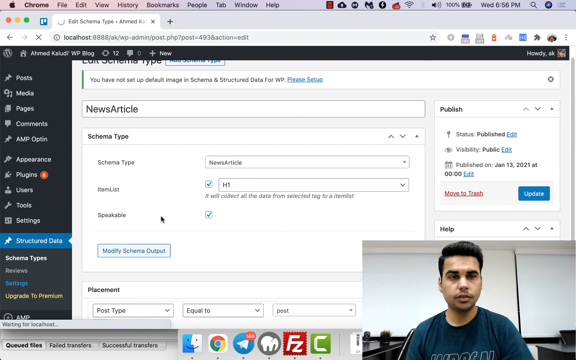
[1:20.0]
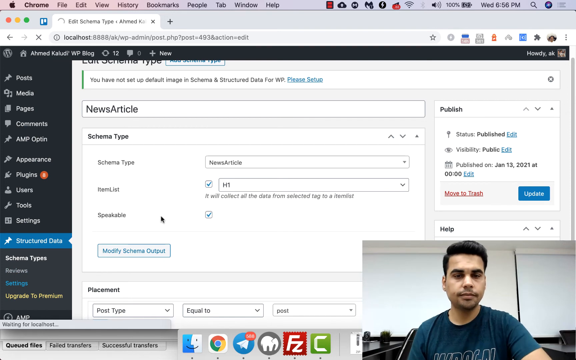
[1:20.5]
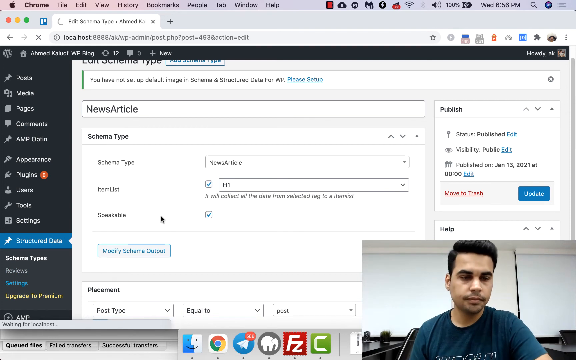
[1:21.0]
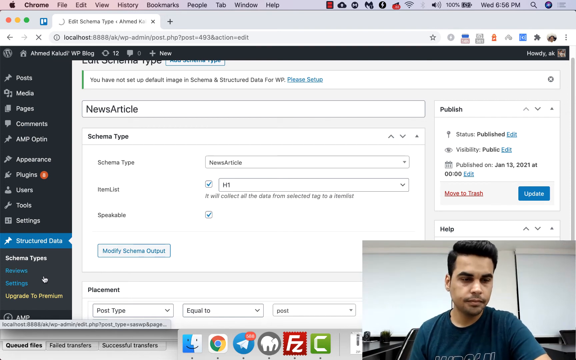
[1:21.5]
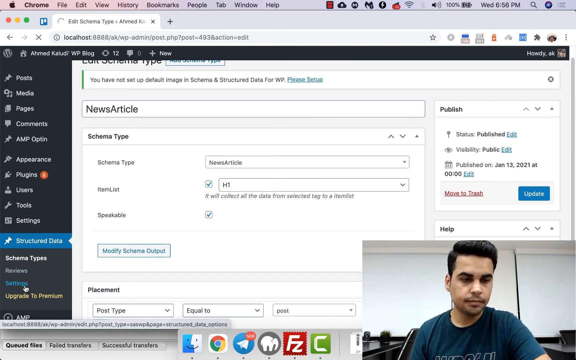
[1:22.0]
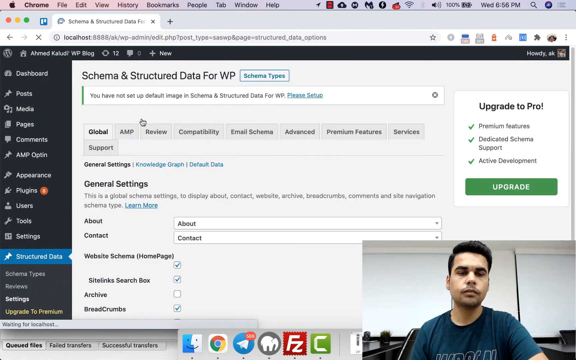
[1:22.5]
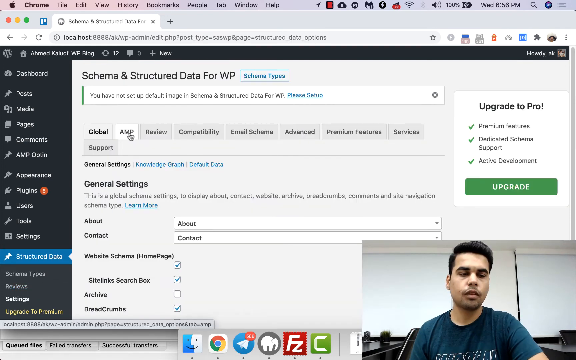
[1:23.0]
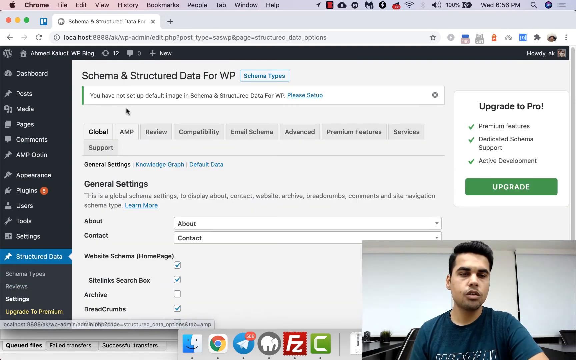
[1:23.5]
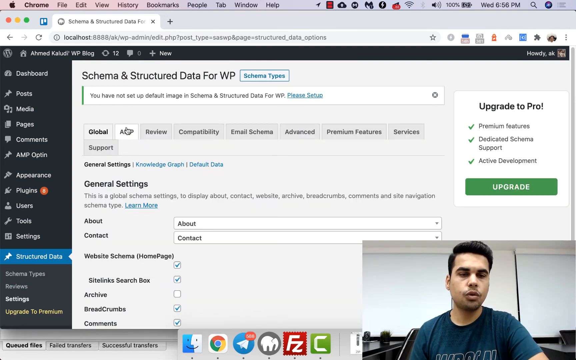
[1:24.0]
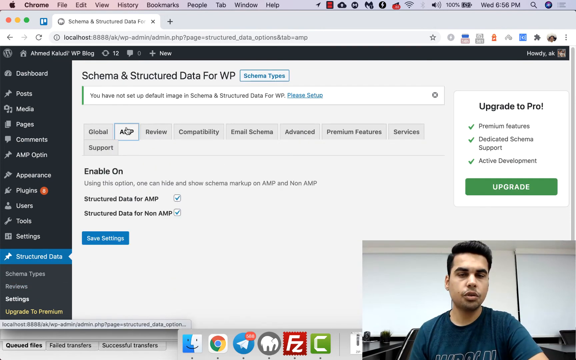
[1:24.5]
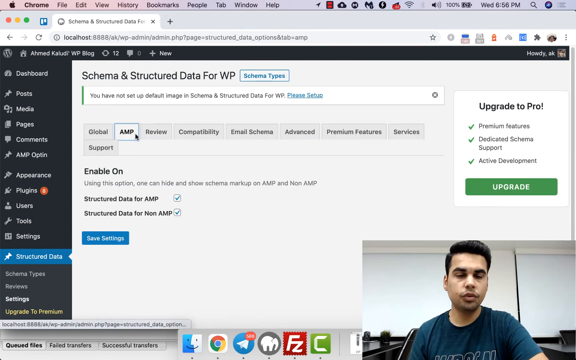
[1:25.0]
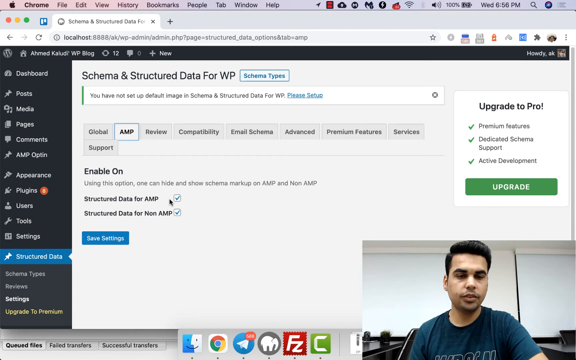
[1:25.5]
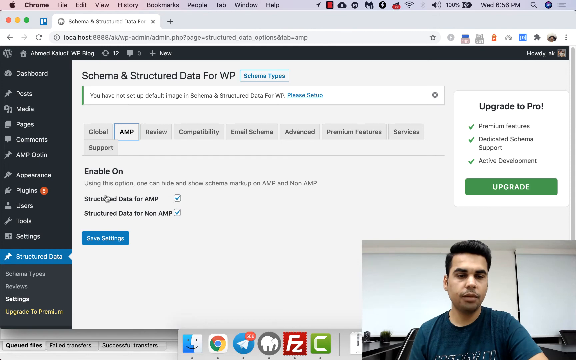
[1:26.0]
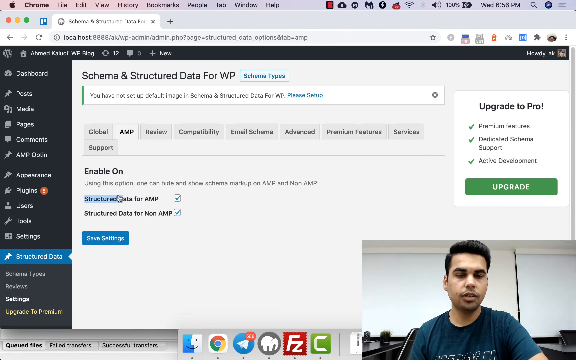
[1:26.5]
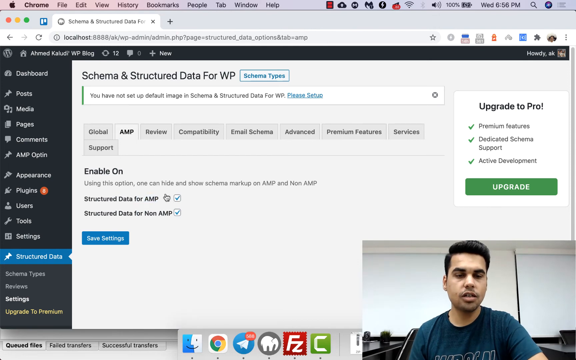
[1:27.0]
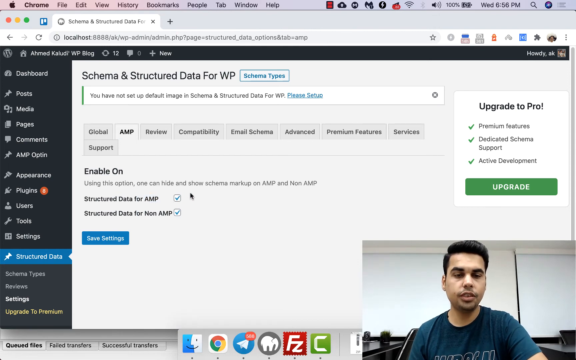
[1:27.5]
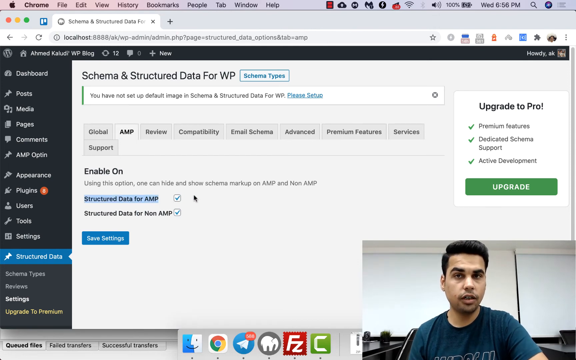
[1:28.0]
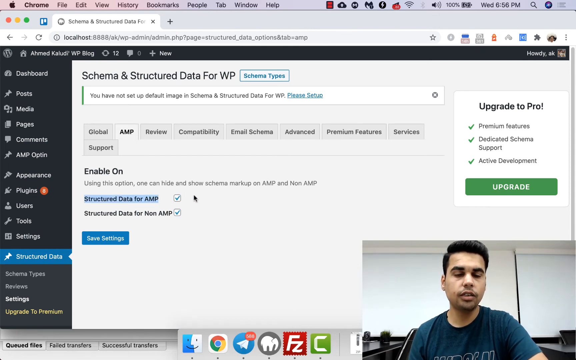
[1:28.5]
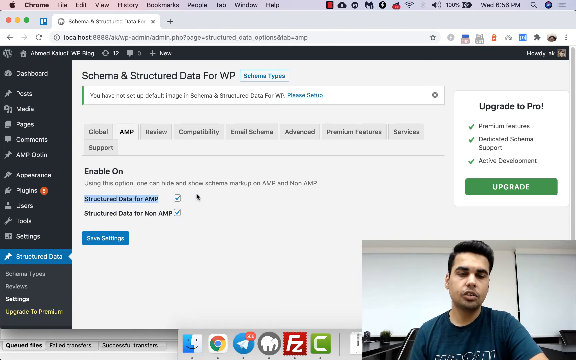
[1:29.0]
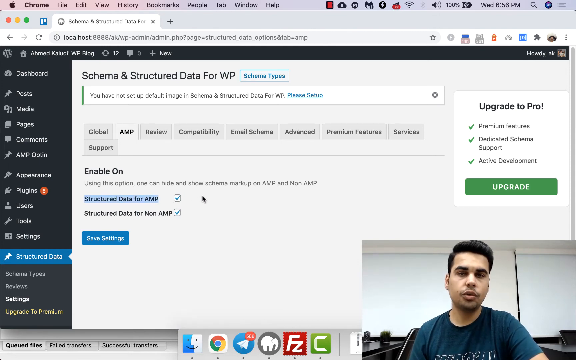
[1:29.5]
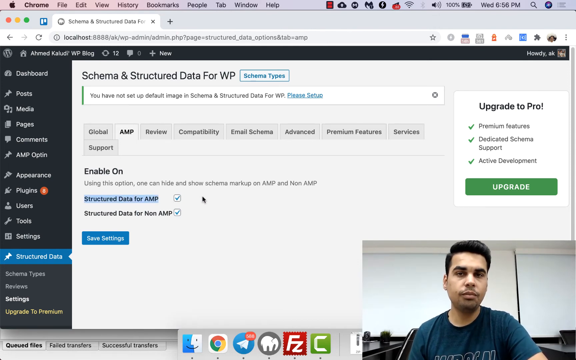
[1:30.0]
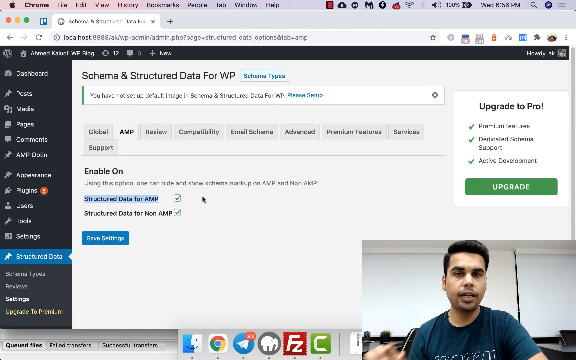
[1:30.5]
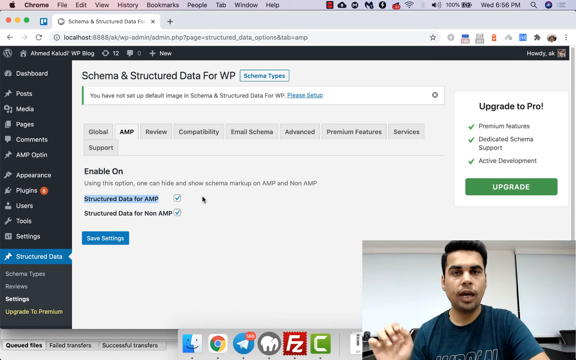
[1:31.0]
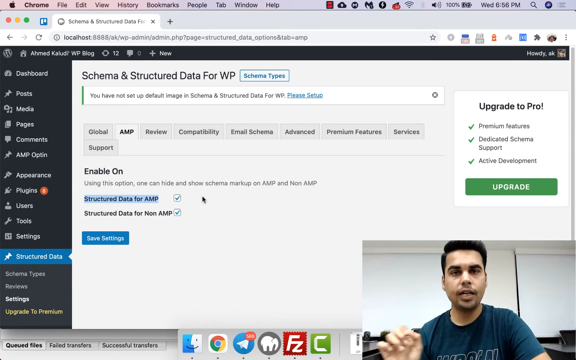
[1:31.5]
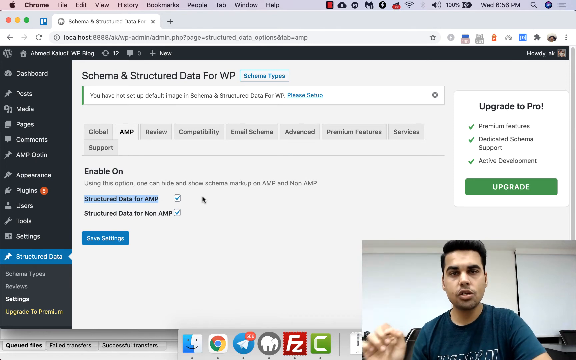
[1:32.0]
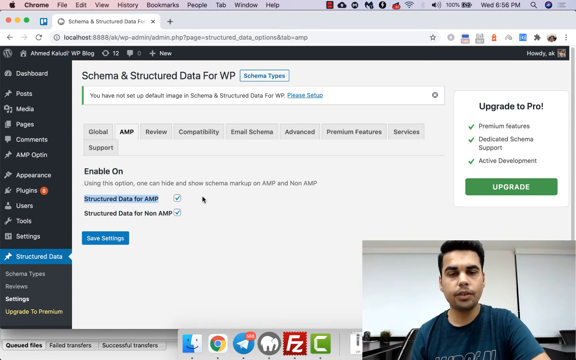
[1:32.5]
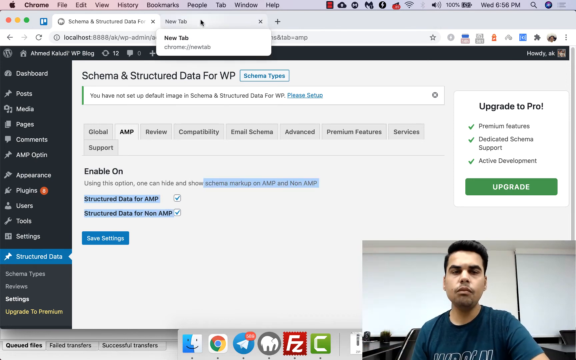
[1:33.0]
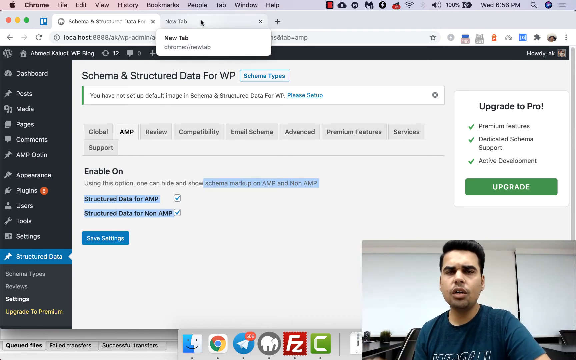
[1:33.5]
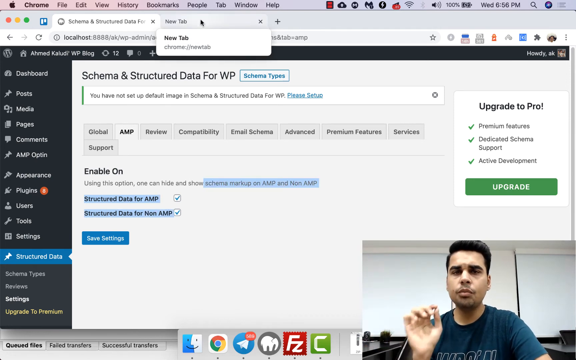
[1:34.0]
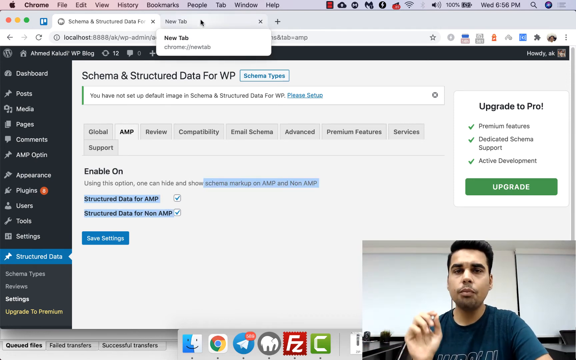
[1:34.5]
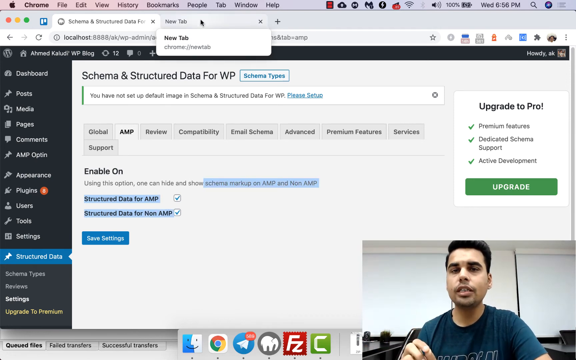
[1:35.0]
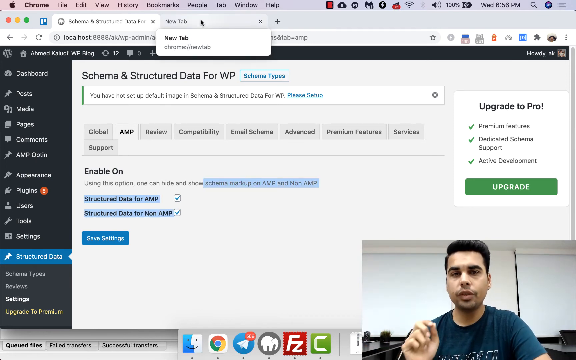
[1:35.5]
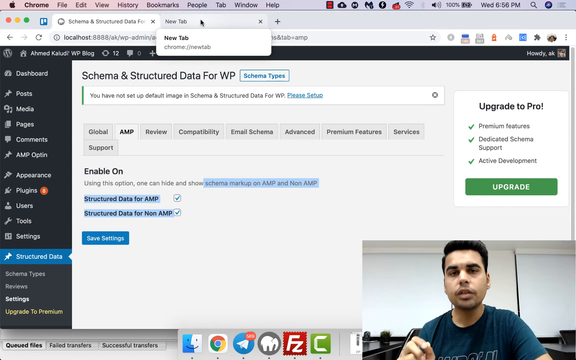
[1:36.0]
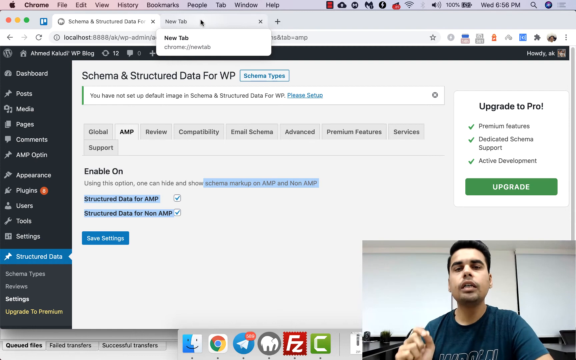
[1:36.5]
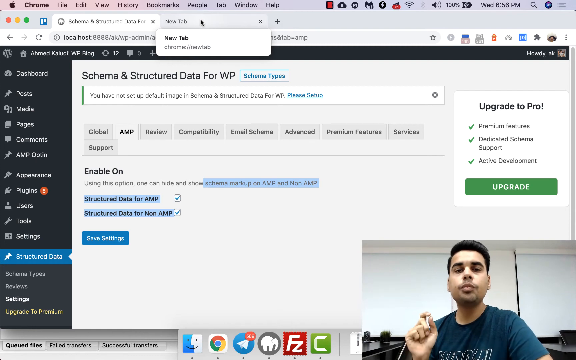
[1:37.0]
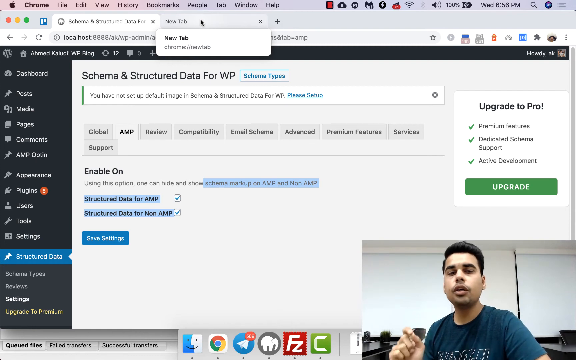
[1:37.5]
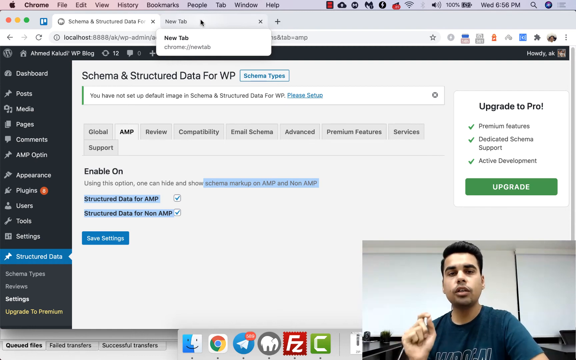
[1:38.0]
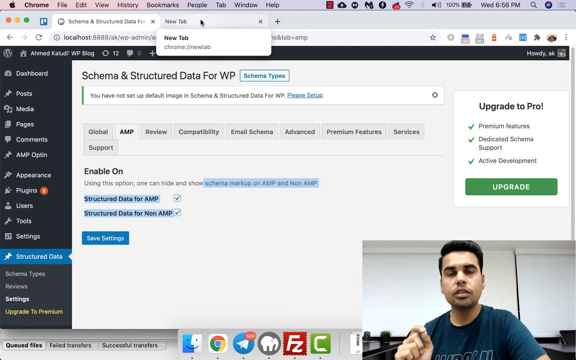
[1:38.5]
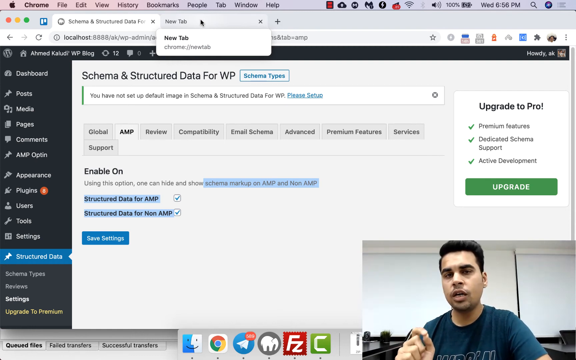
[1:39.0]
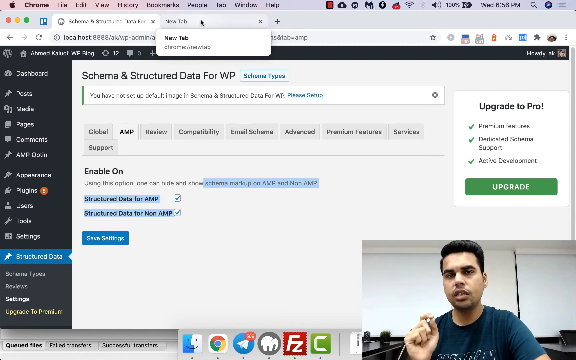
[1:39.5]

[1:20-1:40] The next page loads, showing a web page that says "schema and structured data for WP". It has a number of navigation options, including global, which is currently on, and AMP, review, compatibility, email schemas, advanced, premium features, and services and support. He clicks on the AMP page, which says "enable" at the top. There are two checkboxes for two options: "structured data for AMP" and "structured data for non-AMP". At the bottom of the page is a save options or save settings button. He highlights "structured data for AMP" and "structured data for non-AMP" as well as some of the description as he speaks to the camera and uses his right hand to explain. On the right of the screen is an upgrade to pro panel showing the features available with an upgrade, along with an upgrade button.